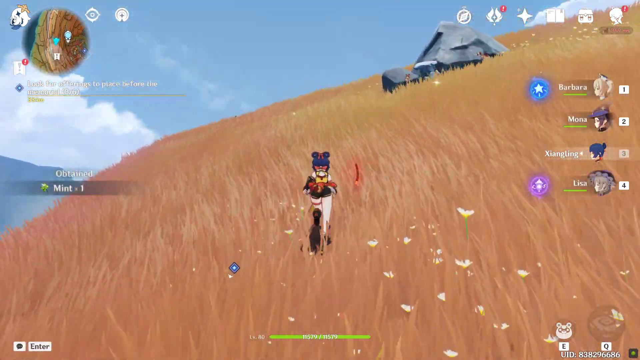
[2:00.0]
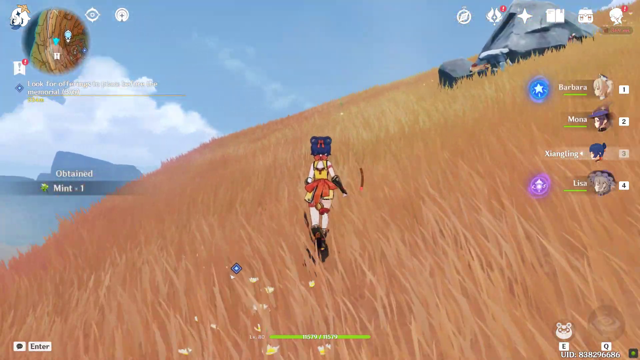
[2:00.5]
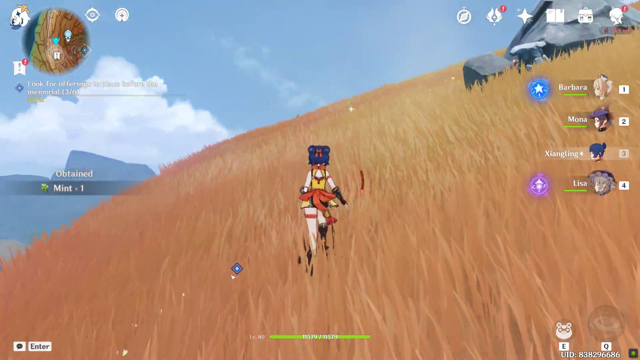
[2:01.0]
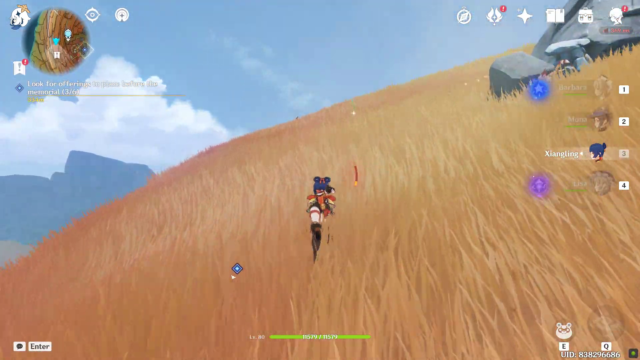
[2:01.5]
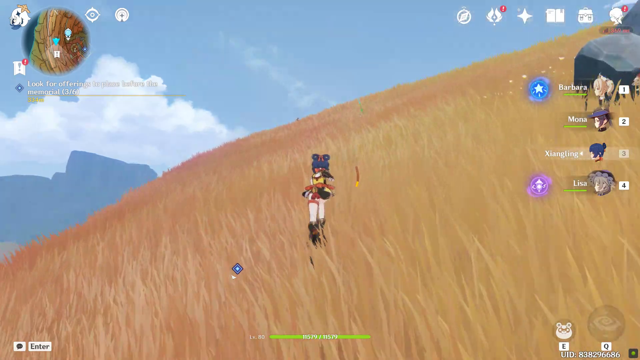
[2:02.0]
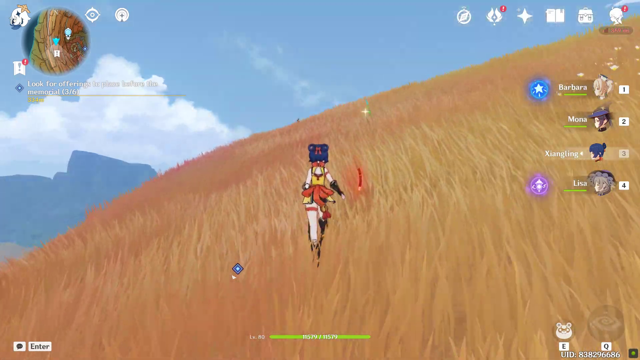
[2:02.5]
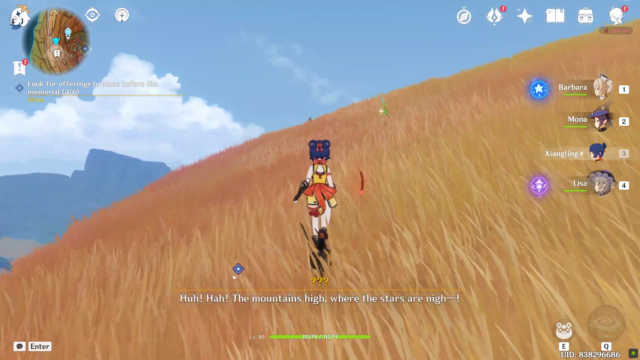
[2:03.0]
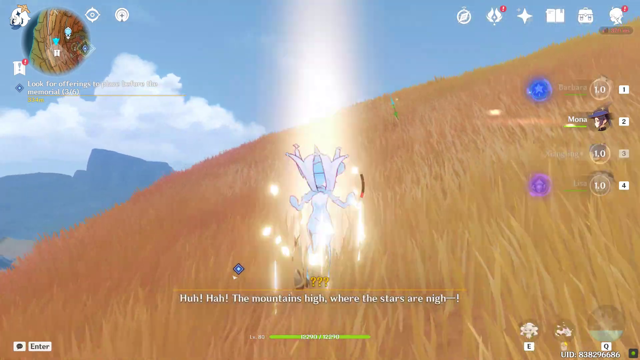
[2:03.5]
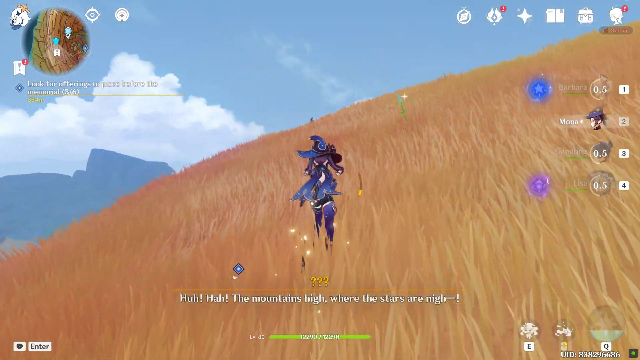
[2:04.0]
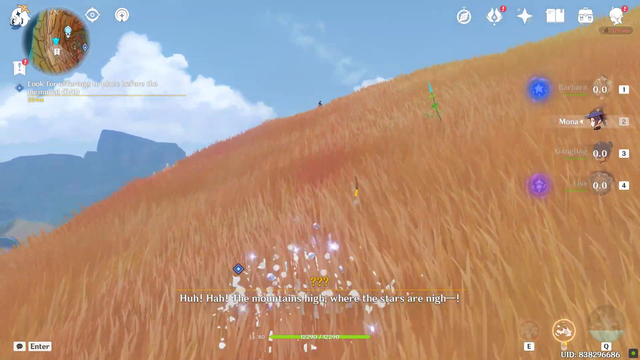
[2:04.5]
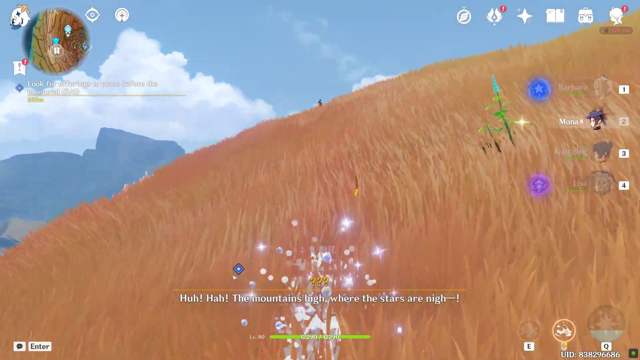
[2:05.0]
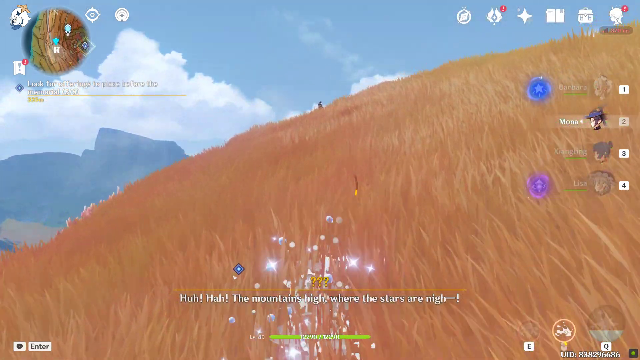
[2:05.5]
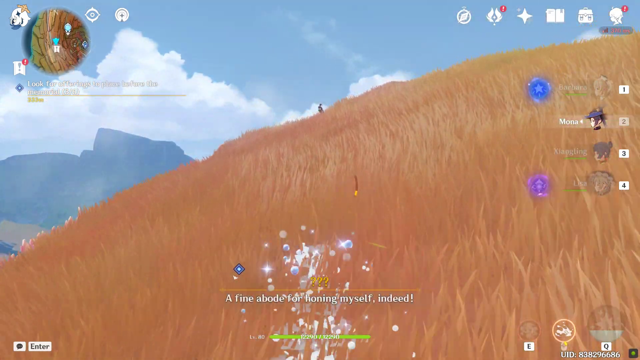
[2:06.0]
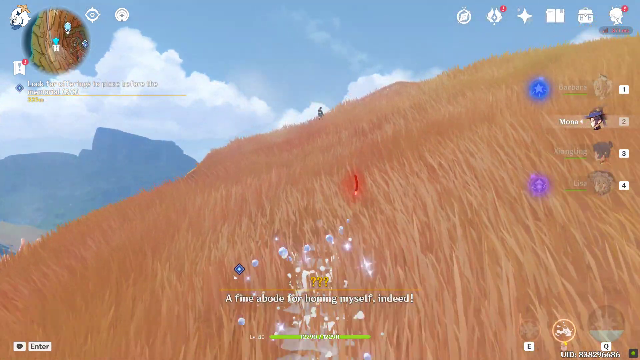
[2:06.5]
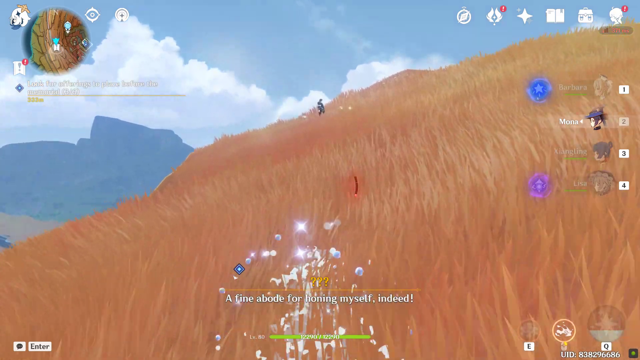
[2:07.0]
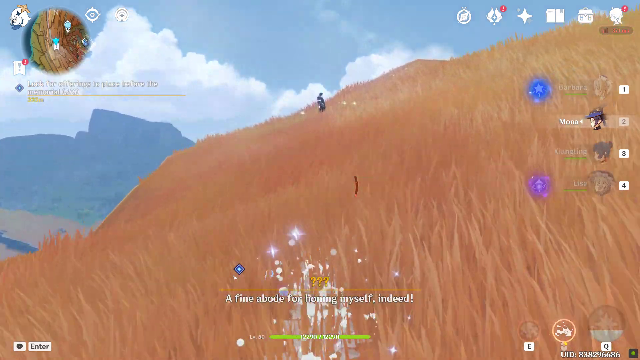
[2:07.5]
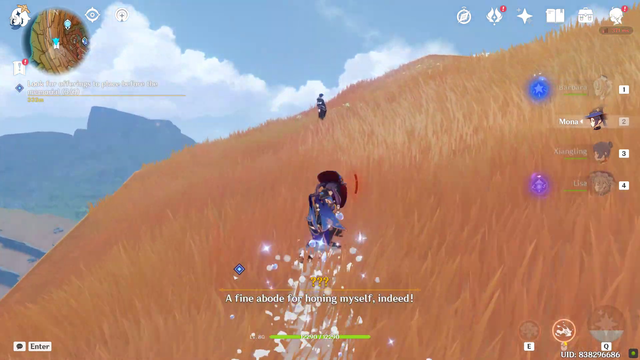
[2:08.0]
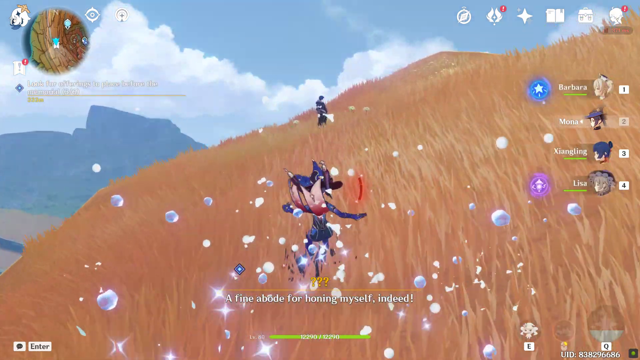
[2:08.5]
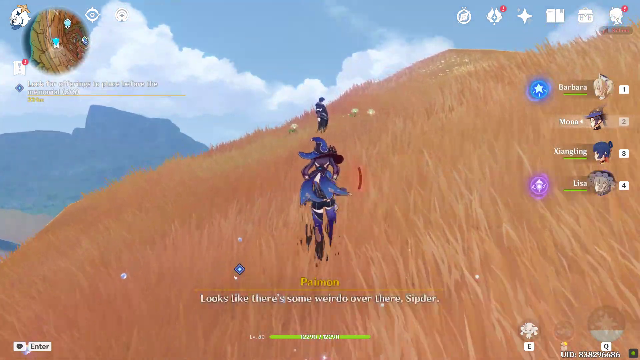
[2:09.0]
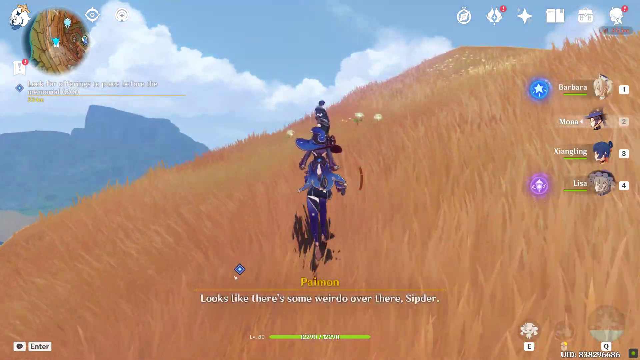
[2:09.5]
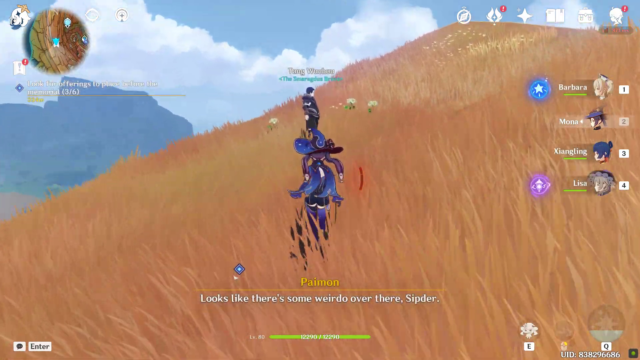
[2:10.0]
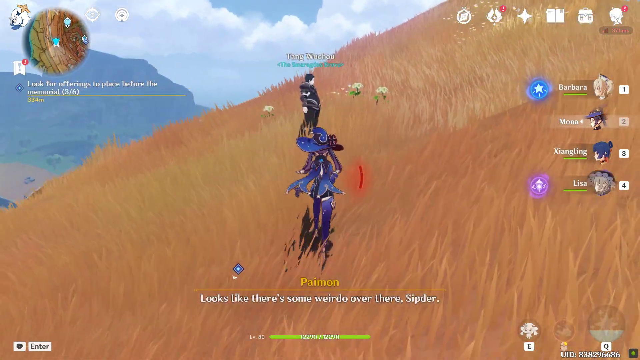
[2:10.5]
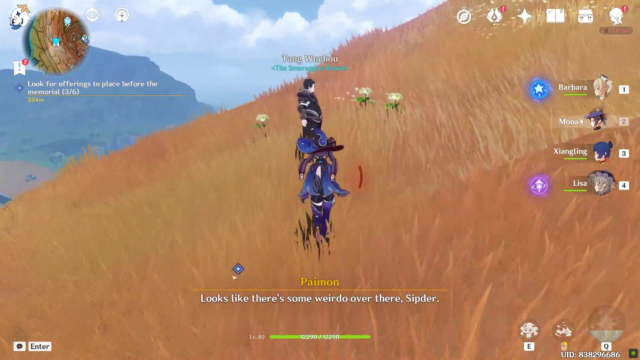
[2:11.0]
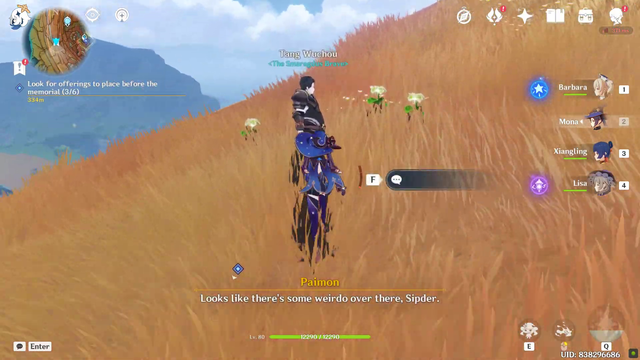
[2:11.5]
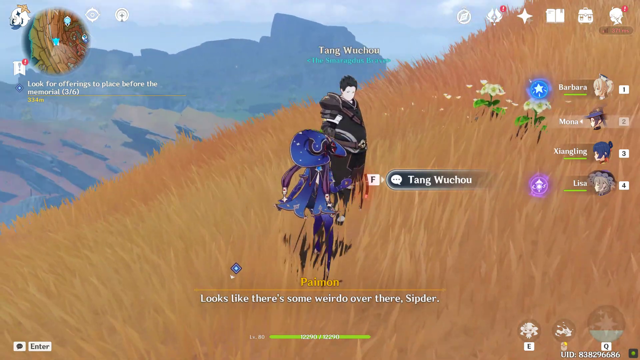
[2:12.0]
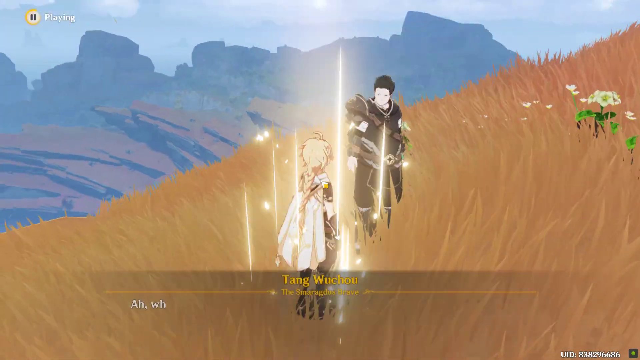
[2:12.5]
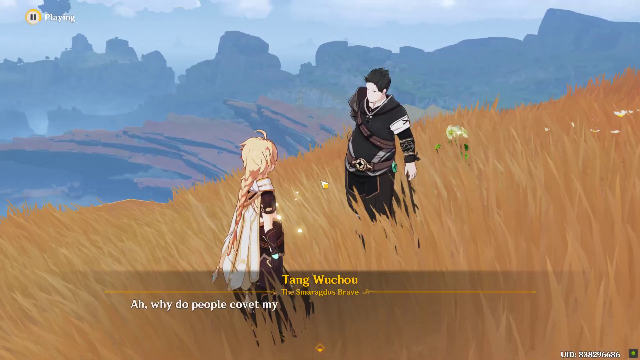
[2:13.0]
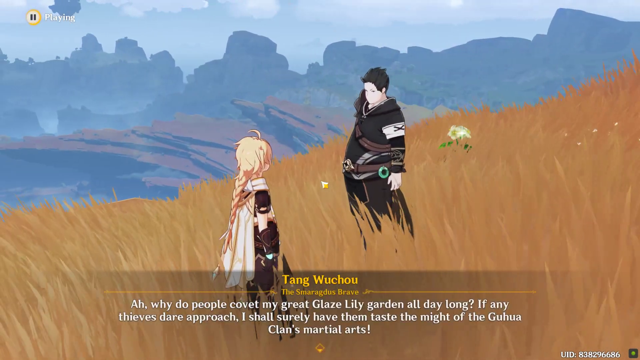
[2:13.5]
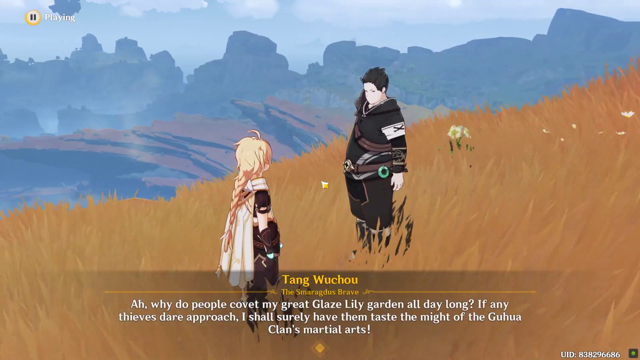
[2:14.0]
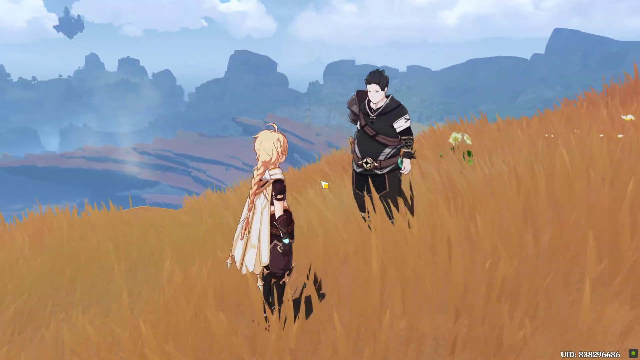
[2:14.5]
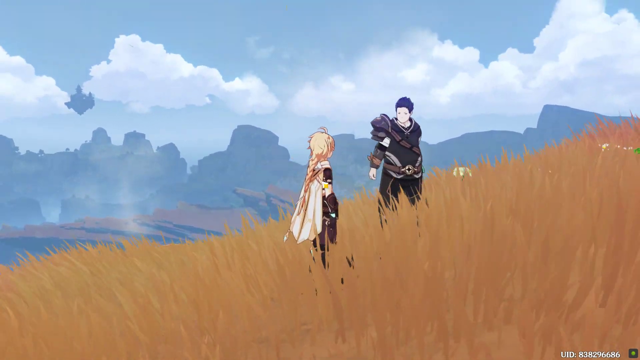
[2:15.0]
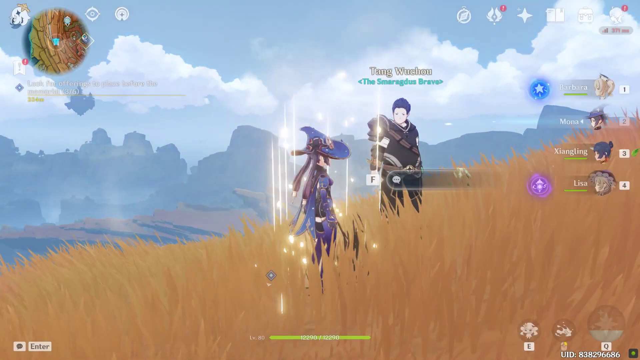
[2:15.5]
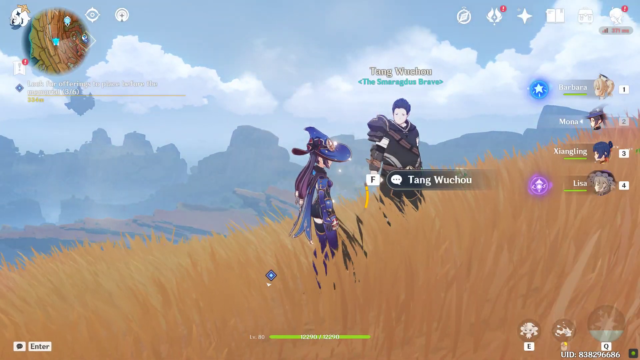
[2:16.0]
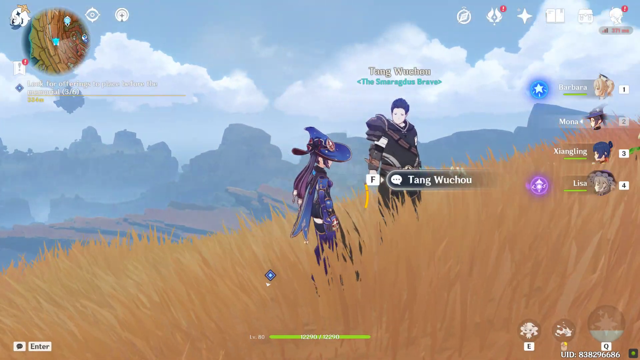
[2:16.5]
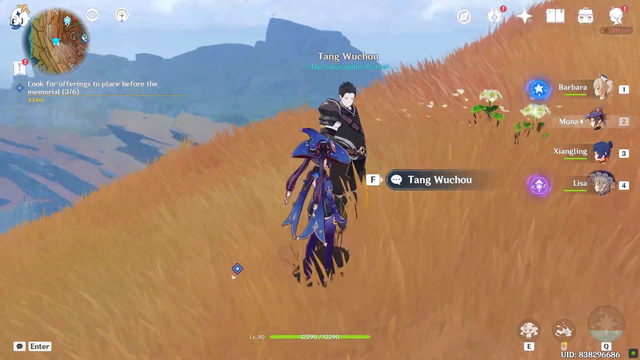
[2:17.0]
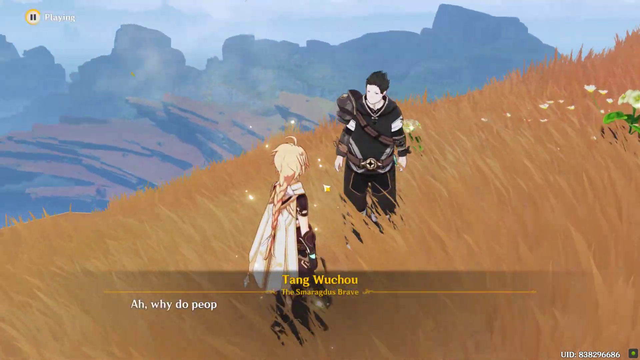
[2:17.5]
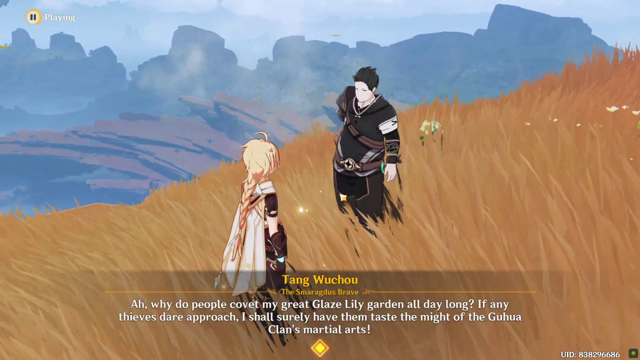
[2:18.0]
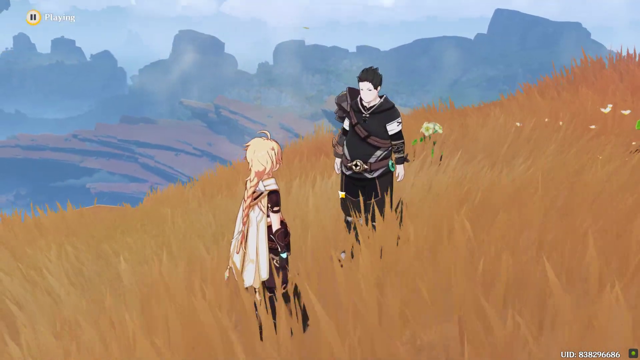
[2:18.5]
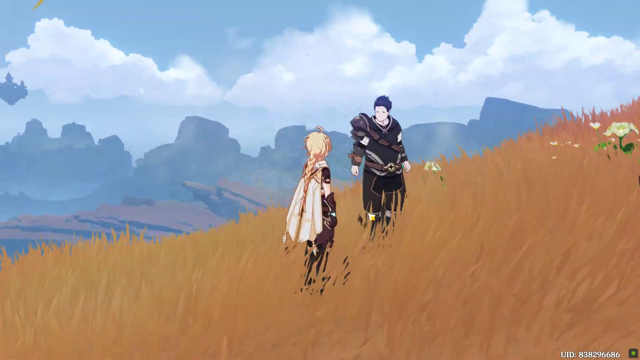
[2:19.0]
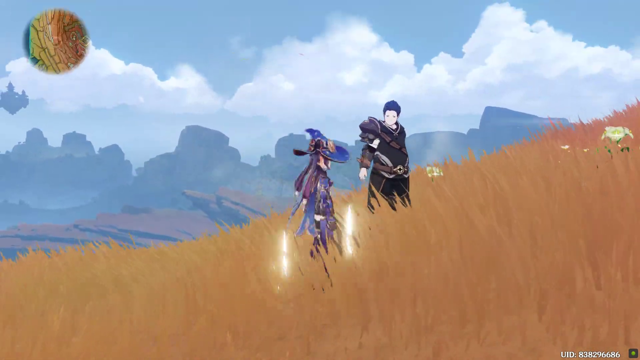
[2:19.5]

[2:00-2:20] She changes into her purplish garb again and goes underground, and white text reads "Ha ha the mountains high where the stars are nigh!" Only the red stripe above the ground and the sparkles above the ground are visible as she moves. She pops back up and approaches a character on the right who seems to be Tang Wushuang; he turns to her. He has black hair and wears armour of sorts, mostly black, with a brownish band and belt around his body. She suddenly changes into a character with long braided blonde hair hanging down her back, wearing a white cloak around her neck and shoulders. Text at the bottom mentions "my great glaze lily garden all day long" and continues "any thieves dare approach I shall surely have them taste the might". She then switches back to the purple clothes, and then back to the blonde character again.